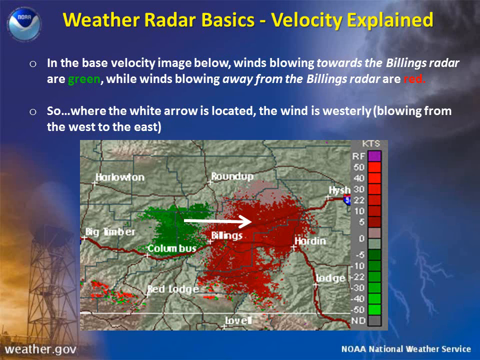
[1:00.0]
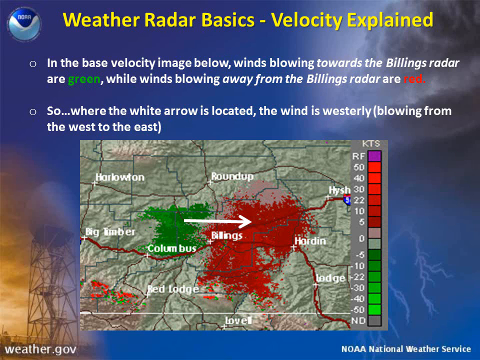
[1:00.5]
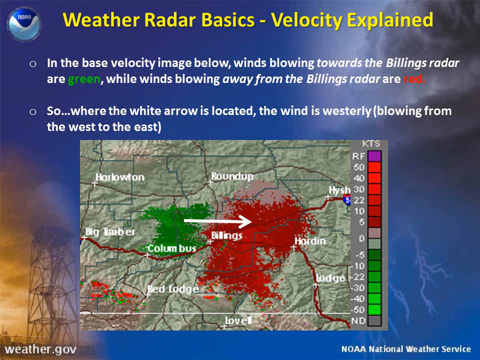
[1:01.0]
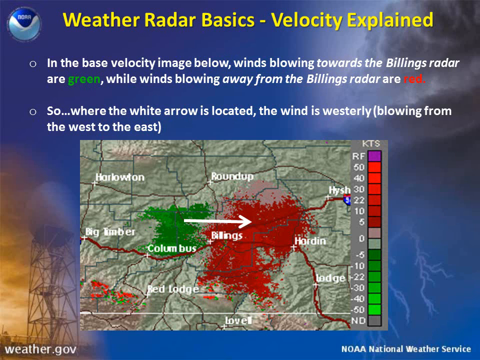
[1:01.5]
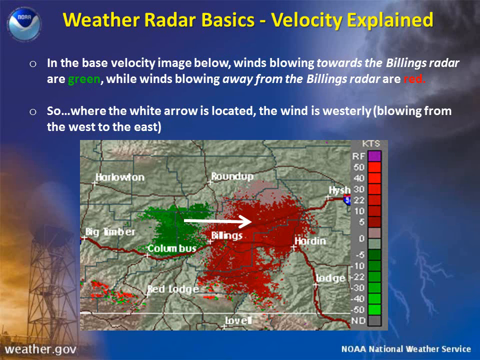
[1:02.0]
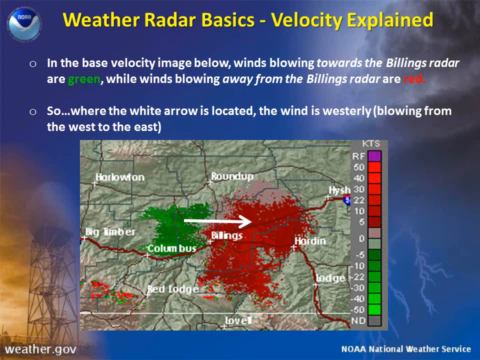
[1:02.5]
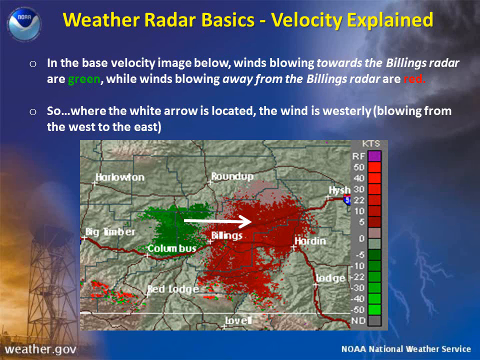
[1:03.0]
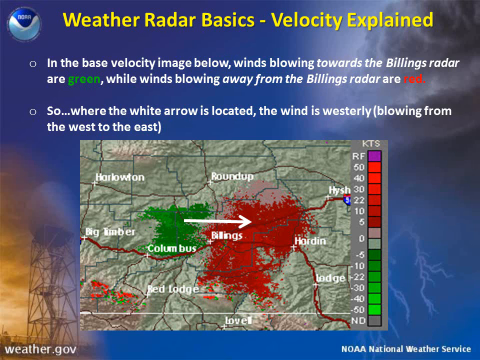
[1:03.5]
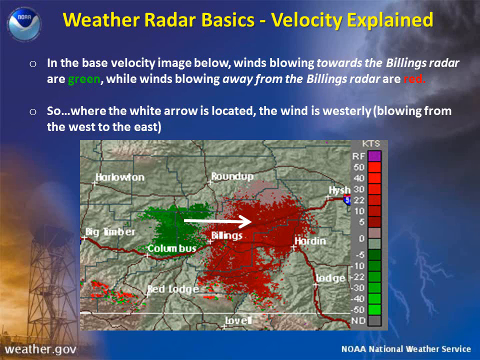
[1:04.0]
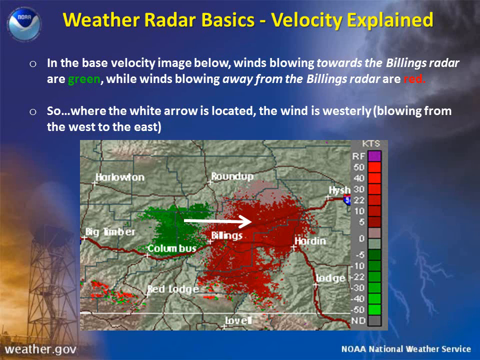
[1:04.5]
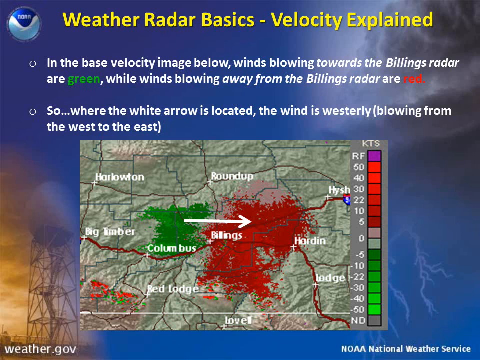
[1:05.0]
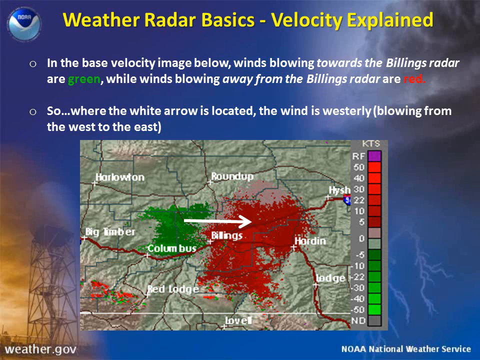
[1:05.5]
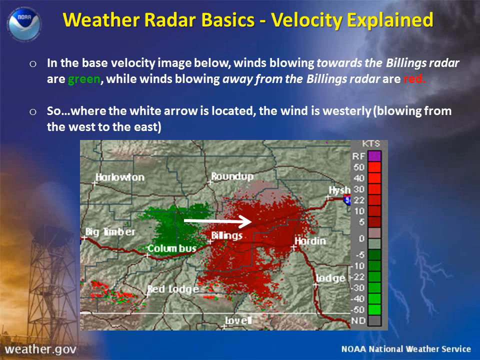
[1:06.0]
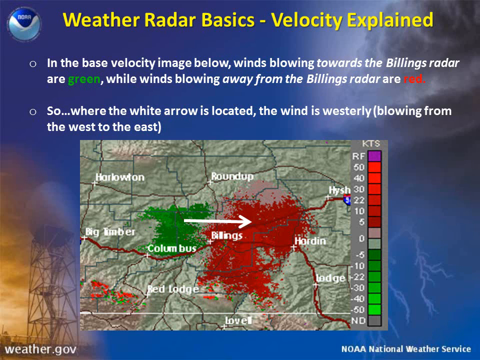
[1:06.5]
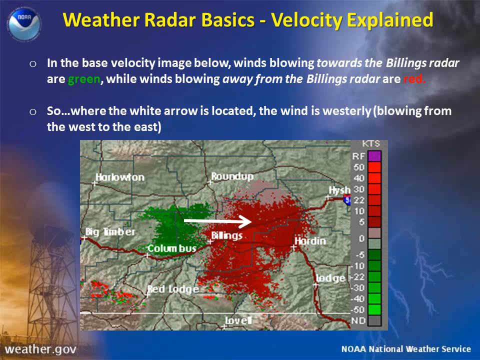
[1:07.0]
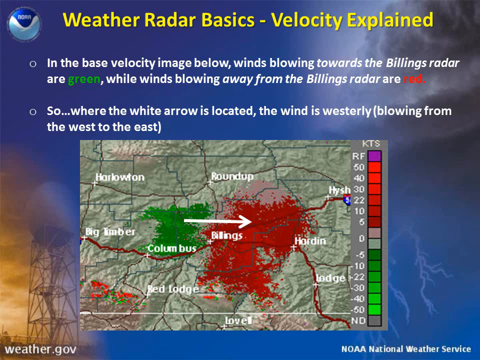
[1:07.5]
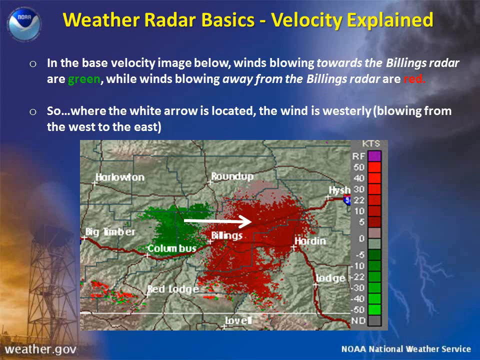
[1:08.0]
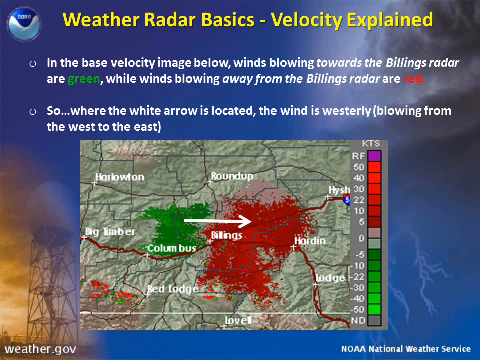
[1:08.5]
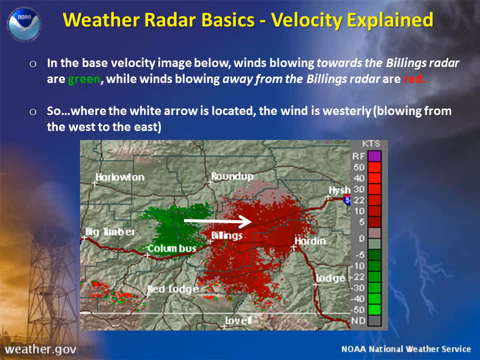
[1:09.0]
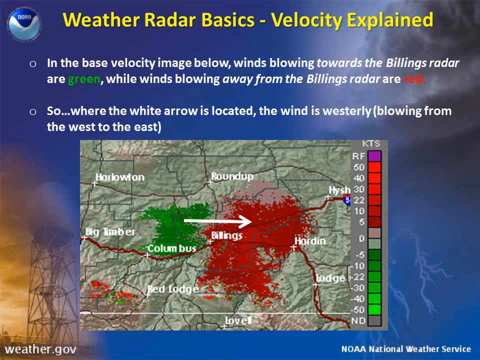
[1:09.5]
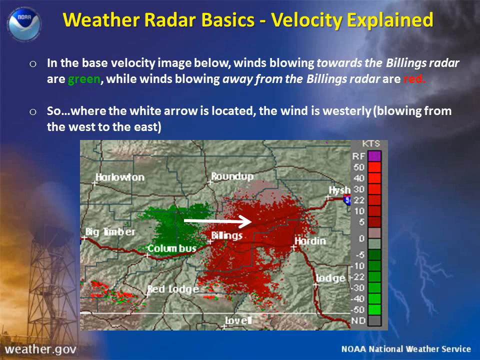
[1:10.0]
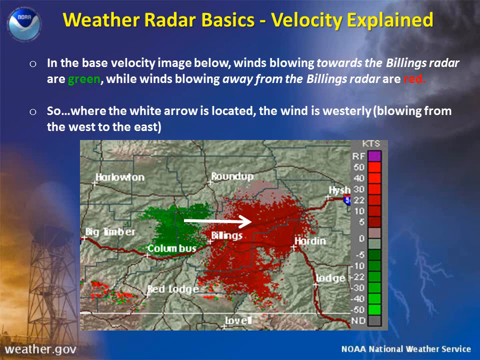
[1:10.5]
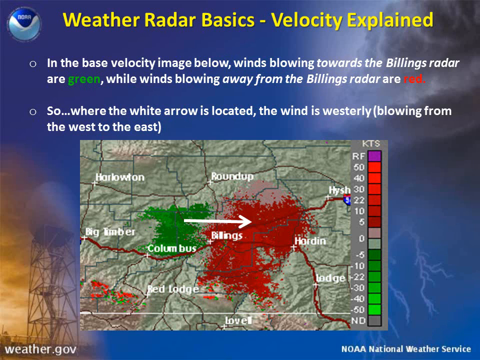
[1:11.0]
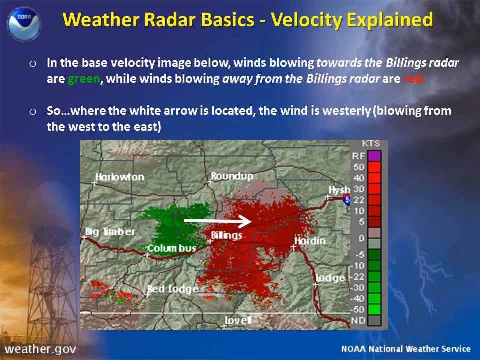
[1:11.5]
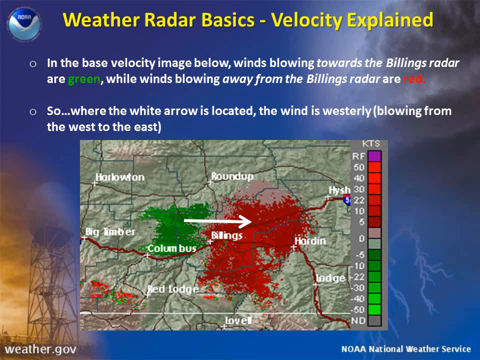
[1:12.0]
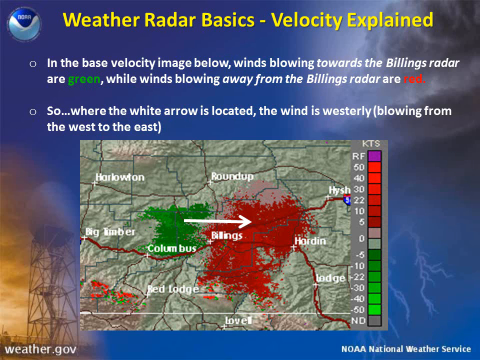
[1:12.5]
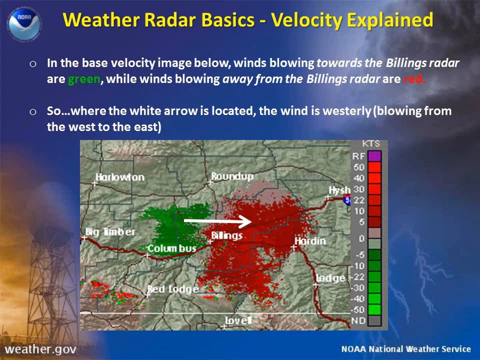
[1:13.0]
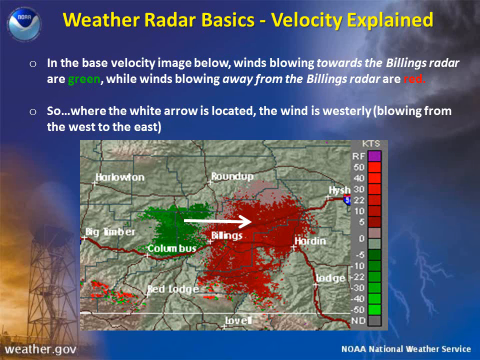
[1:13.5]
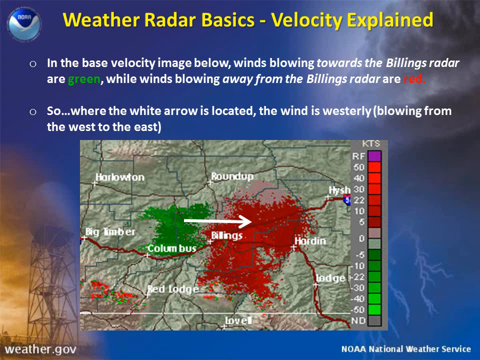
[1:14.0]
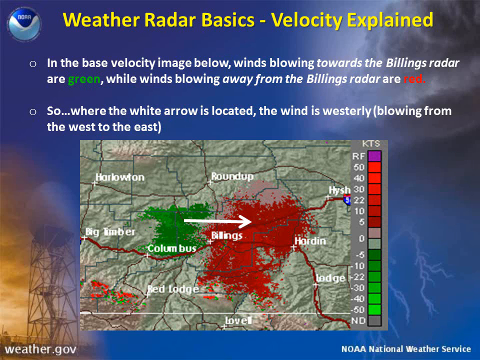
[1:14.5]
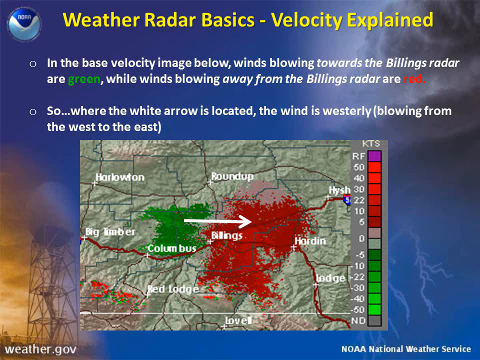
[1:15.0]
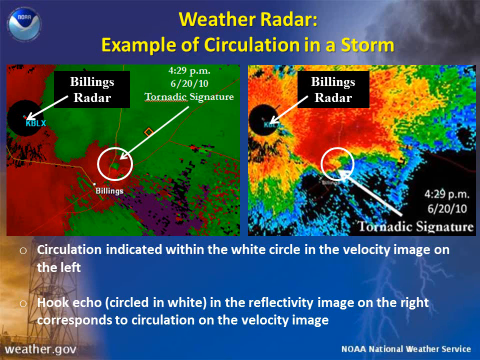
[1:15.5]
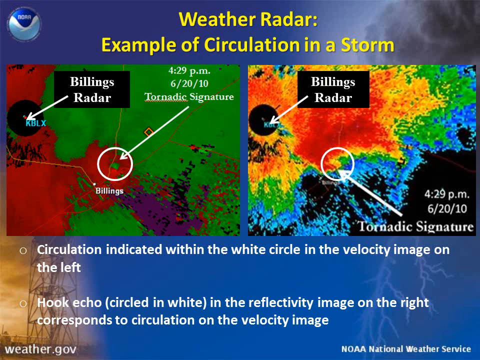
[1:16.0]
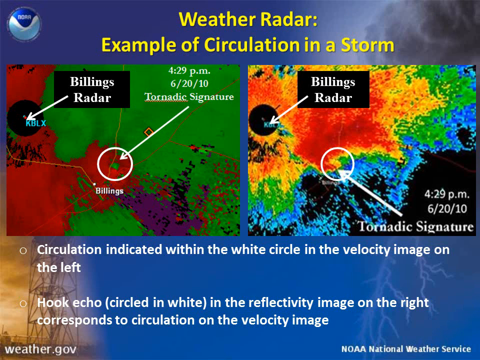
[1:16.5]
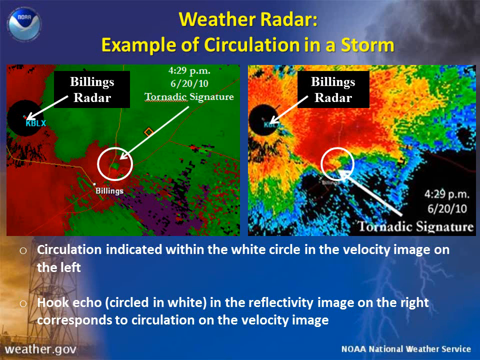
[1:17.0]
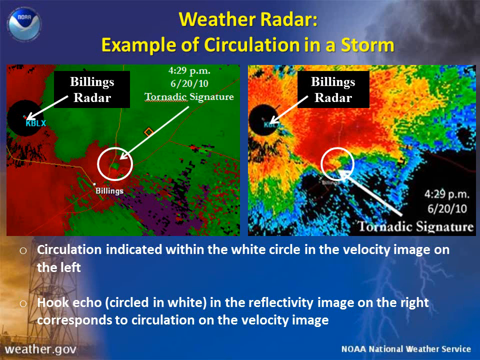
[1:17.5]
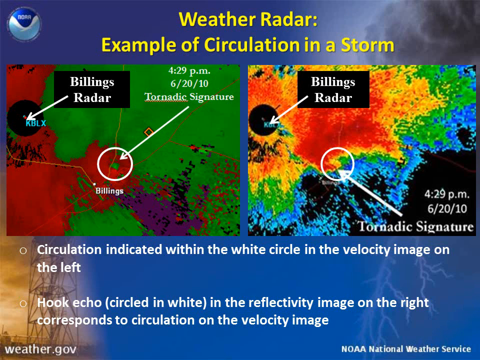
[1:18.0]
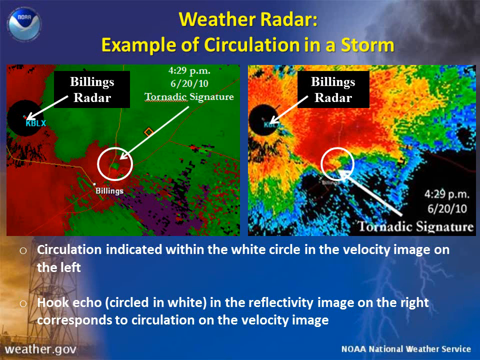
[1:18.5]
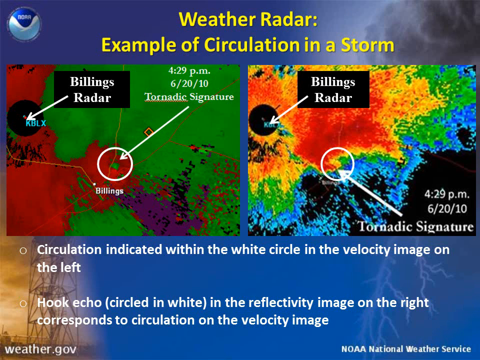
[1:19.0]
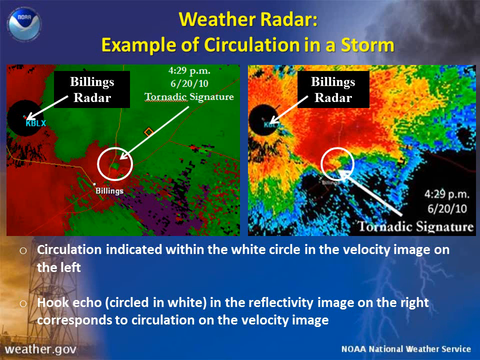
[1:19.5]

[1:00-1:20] A slide appears to be for an educational weather class. In the right corner of the background are dark clouds with a dark bluish shade around them, and in the bluish shade lightning bolts come down toward the ground. The bottom left corner has an orangish, sunset-like hue and a tall tower coming out of the ground that looks like it could be associated with some type of weather measuring device. The top left corner has a bluish hue. The title, in bold yellow text, is "weather radar basics - velocity explained." Next to it is a small circular logo, a solid darker shade of blue in the center and a lighter, kind of wave-like shade of blue on the bottom. The slide has two bullet points, hollow white circles with white text. The first reads "in the base velocity image below winds blowing towards the Billings radar are green while winds blowing away from the Billings radar are red," with the word "green" in green and "red" in red. The second reads "so where the white arrow is located the wind is westerly blowing from west to east." A map with a green patch and a red patch illustrates the bullet points. Next, another slide appears with more weather images showing where the weather is occurring.